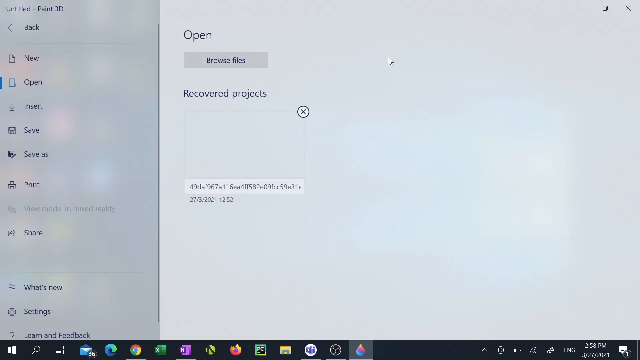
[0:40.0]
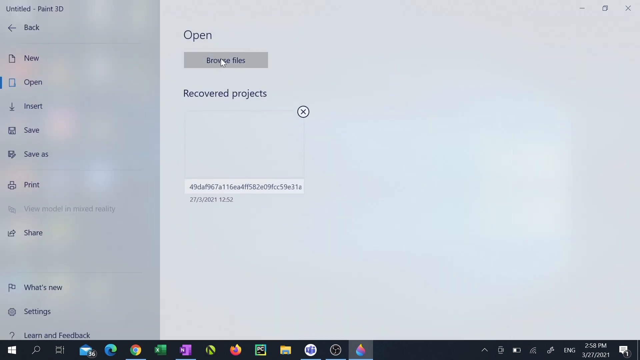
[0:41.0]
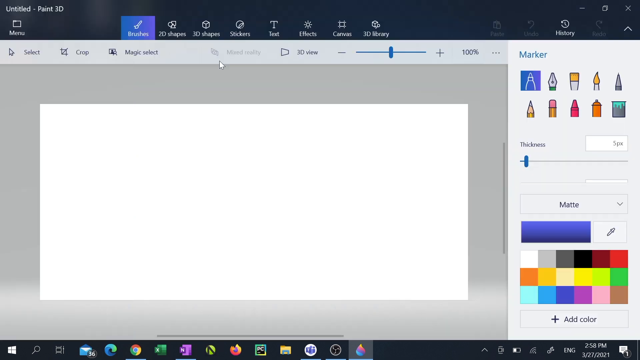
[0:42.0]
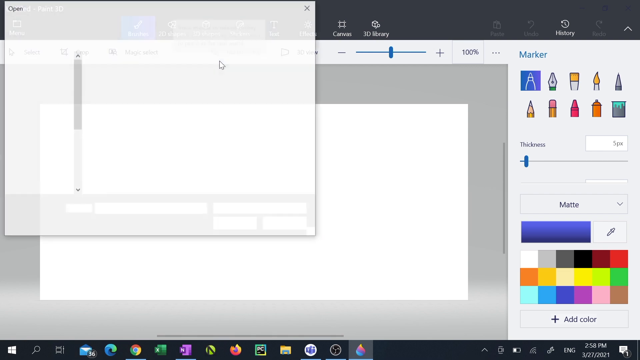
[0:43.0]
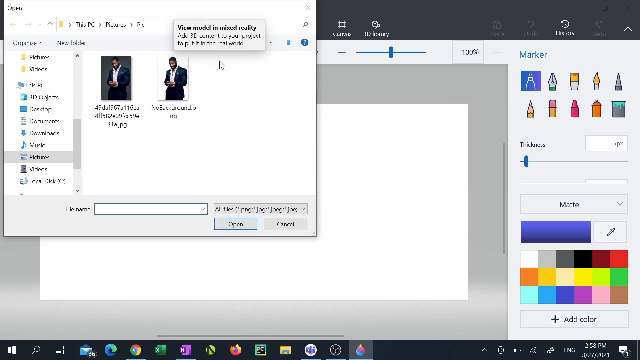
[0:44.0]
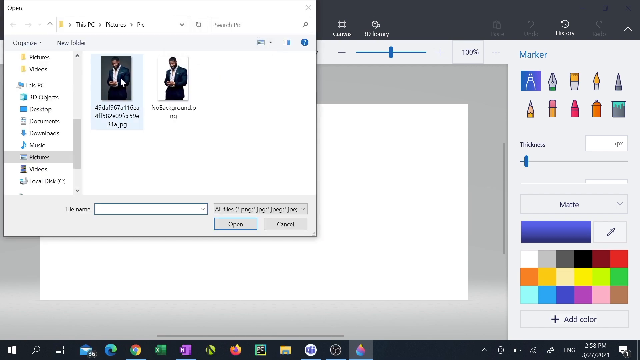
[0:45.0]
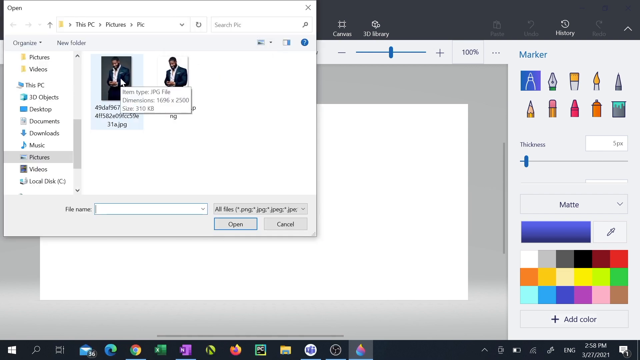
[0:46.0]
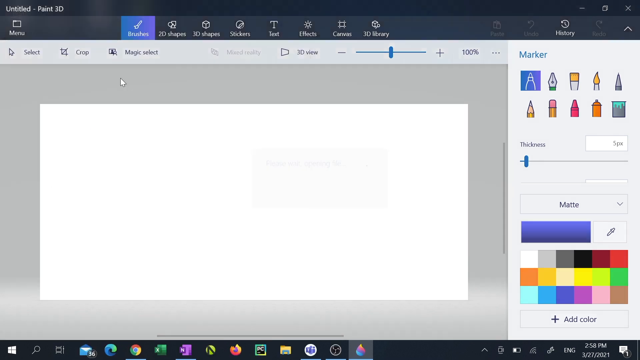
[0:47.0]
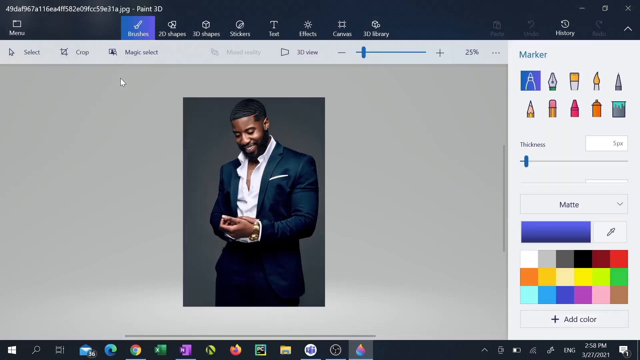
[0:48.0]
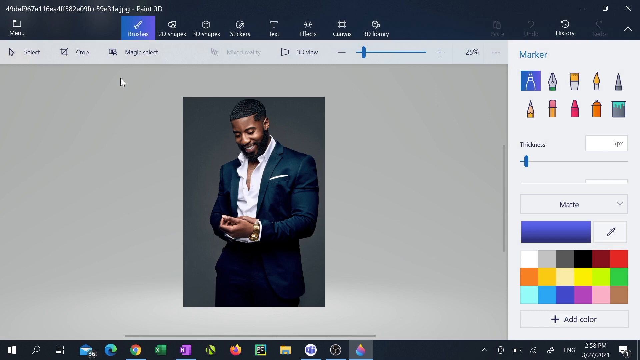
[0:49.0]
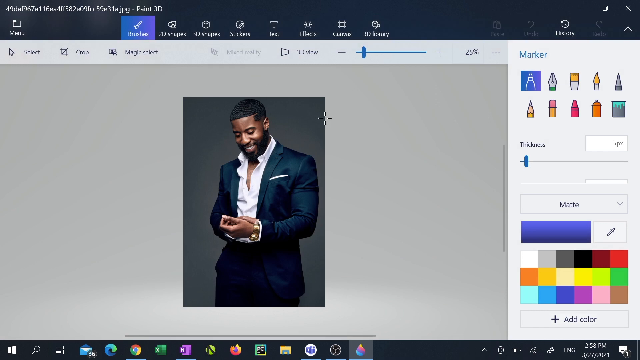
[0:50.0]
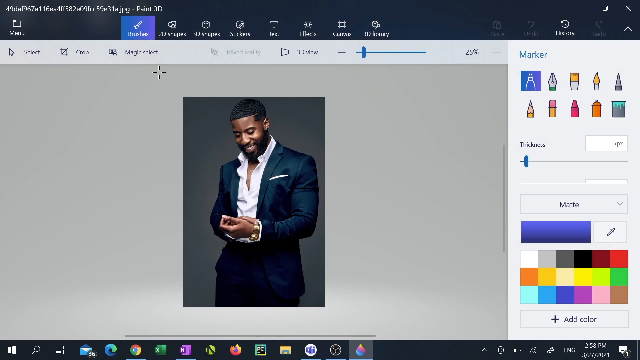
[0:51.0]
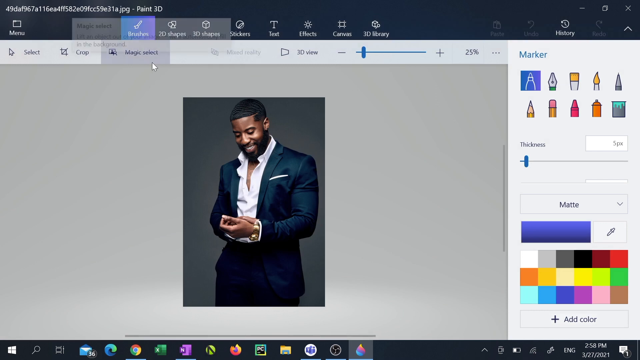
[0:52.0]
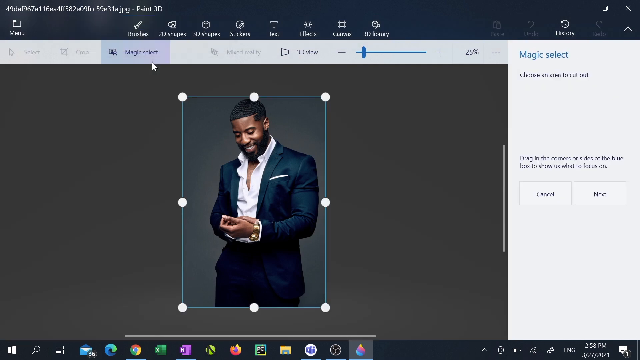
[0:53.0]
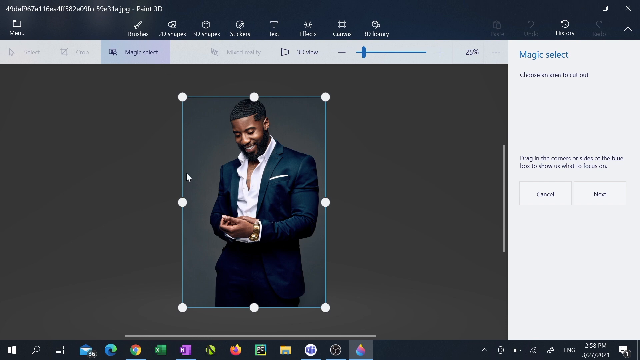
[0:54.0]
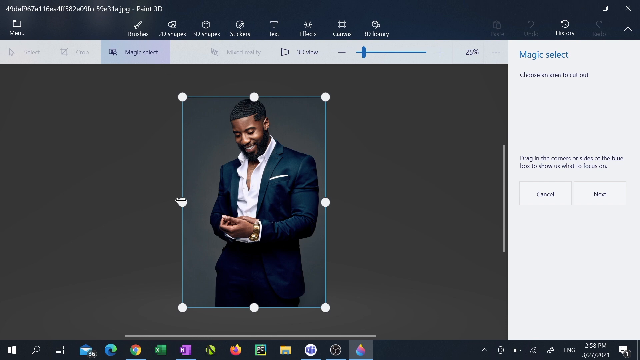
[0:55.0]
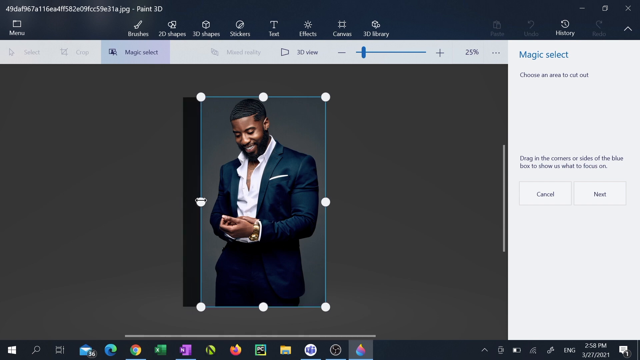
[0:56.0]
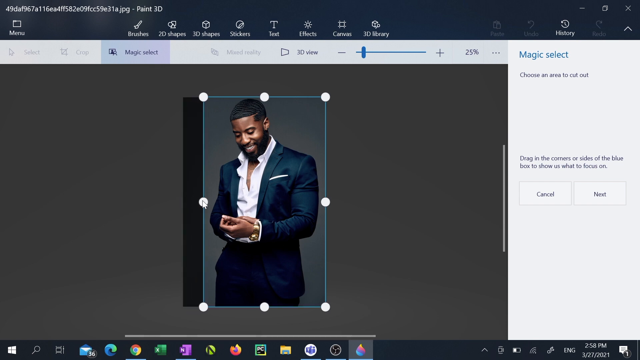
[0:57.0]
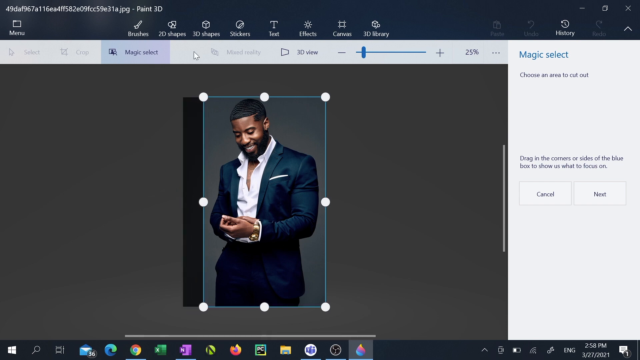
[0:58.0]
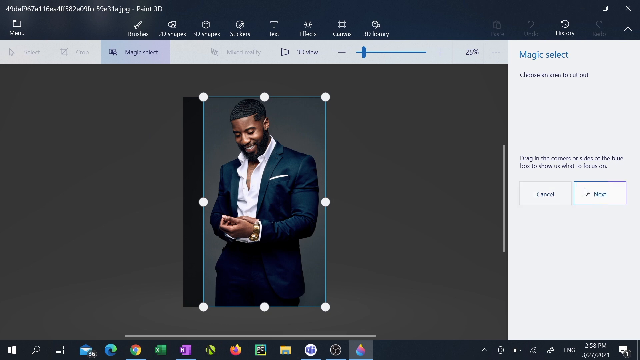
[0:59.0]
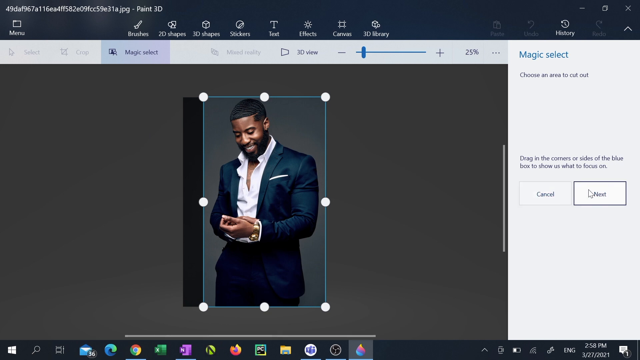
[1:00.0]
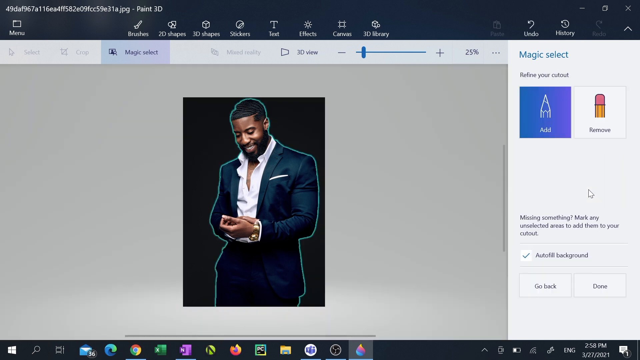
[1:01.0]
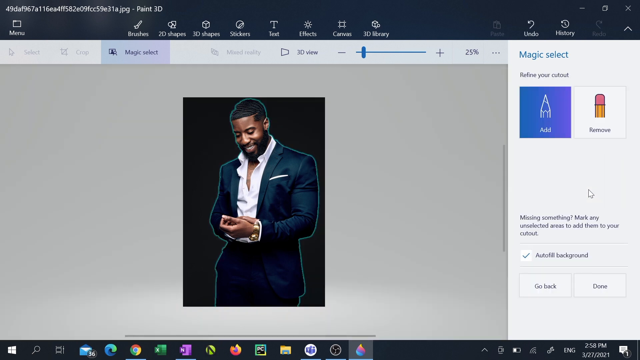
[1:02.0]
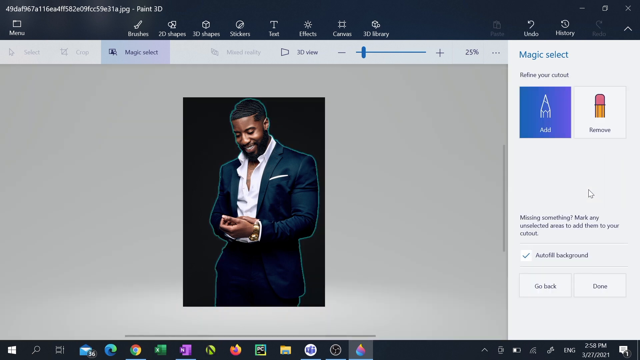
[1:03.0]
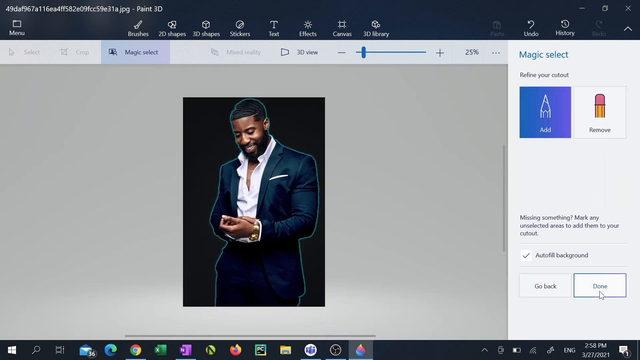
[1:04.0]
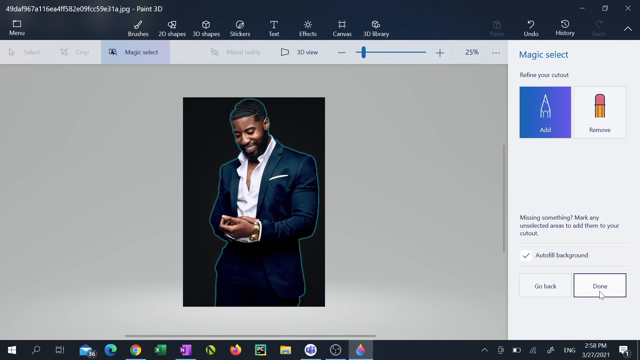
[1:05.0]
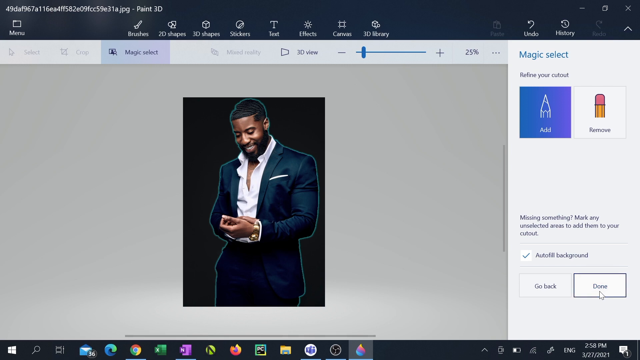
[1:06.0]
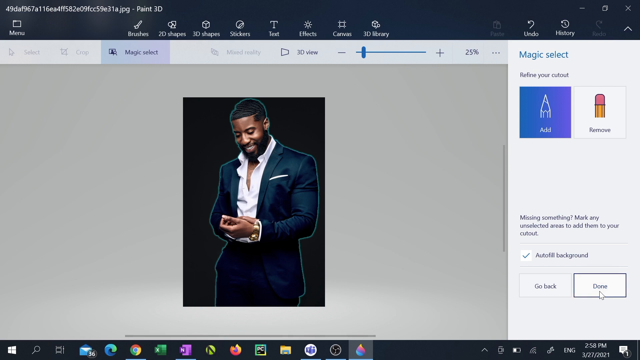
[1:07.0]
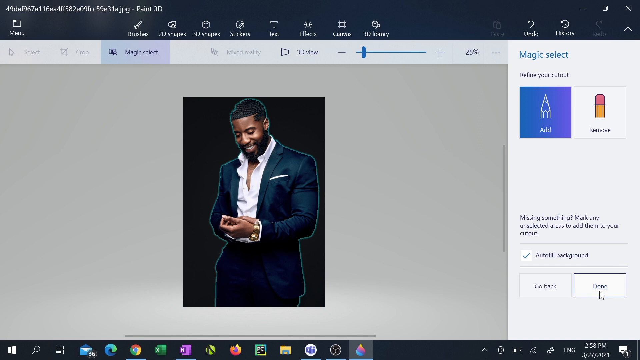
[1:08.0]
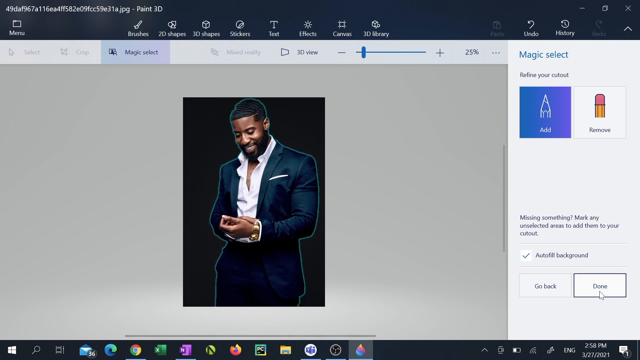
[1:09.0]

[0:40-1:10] The user clicks the Browse Files button, opening a pop-up that shows a photo of a man in a navy suit with a white shirt, his hands clasped together. The user hovers the mouse over the small image and double-clicks it, and it opens much larger on the paint canvas. The user selects magic select at the top of the screen, brings the cursor down to the left side of the image and closes in the left side border. They then click next on the magic select pop-down on the right-hand side of the screen, and then done. Once the side of the image to crop has been selected, the man at the center of the image, in the blue suit with the white shirt, is highlighted in light blue by the magic select.